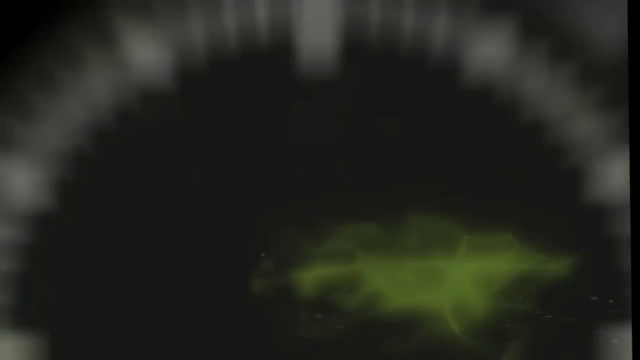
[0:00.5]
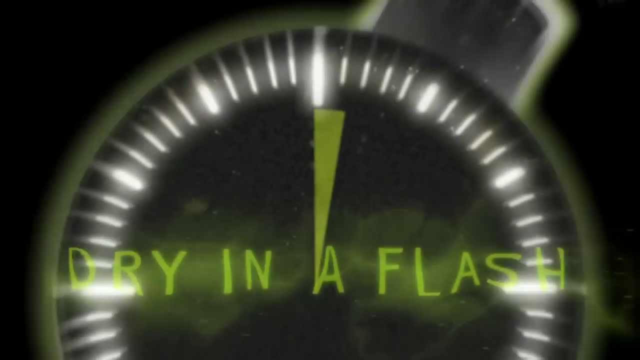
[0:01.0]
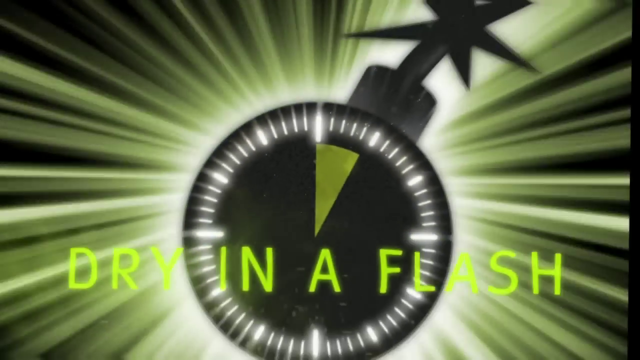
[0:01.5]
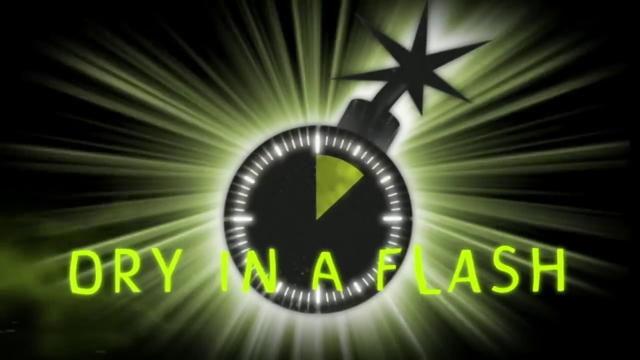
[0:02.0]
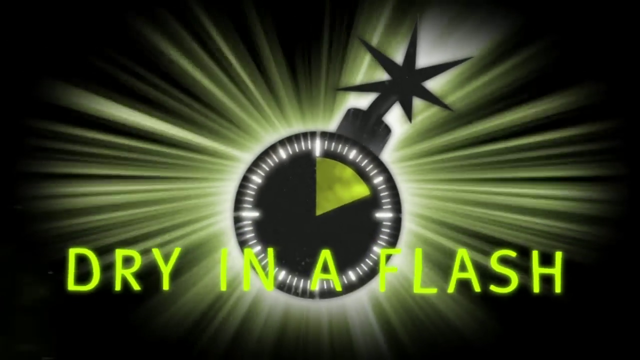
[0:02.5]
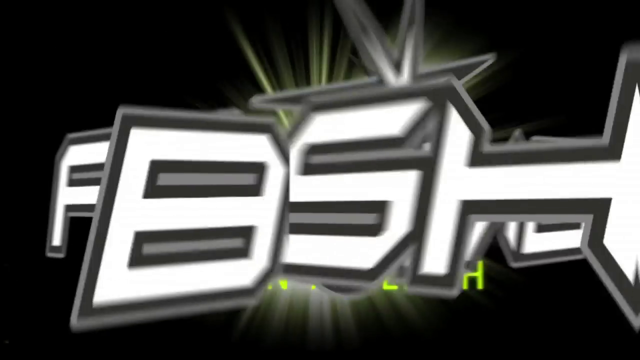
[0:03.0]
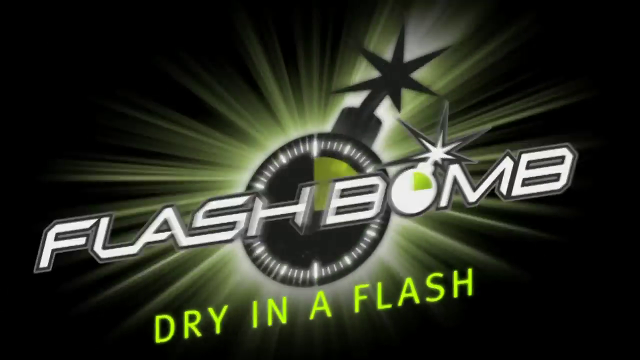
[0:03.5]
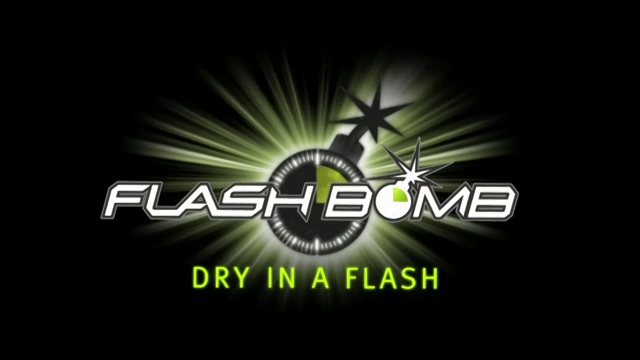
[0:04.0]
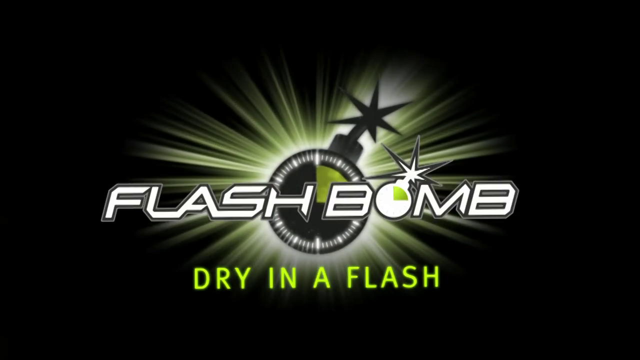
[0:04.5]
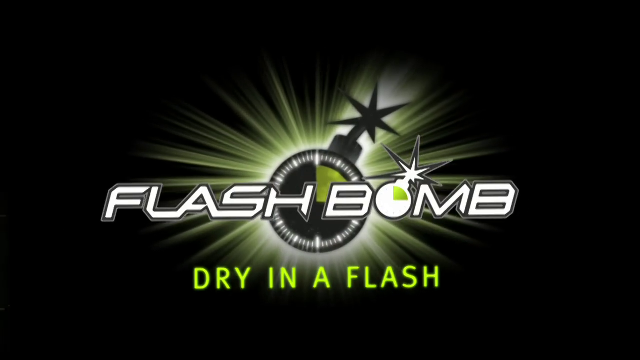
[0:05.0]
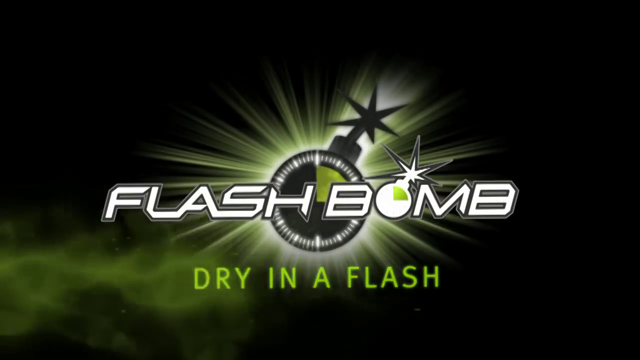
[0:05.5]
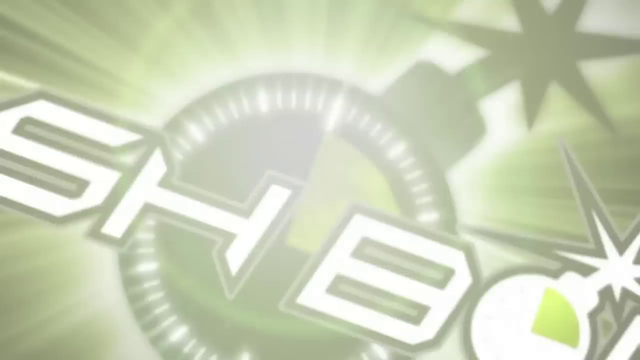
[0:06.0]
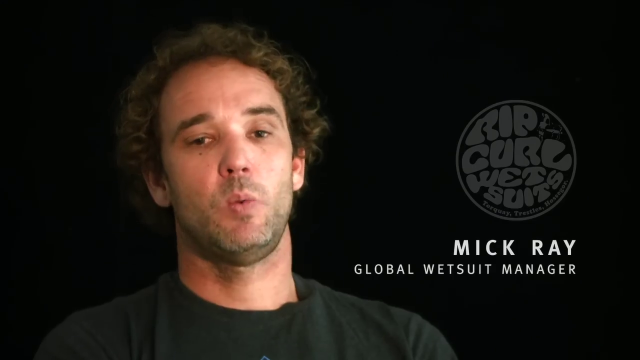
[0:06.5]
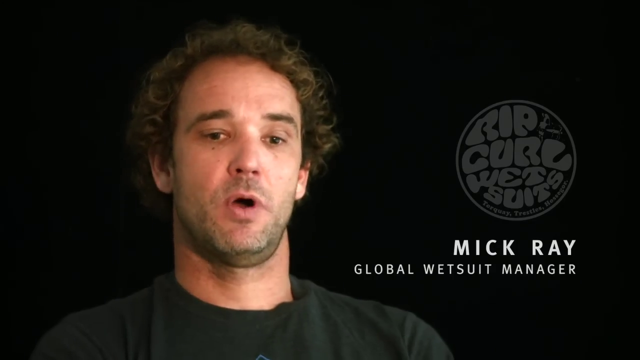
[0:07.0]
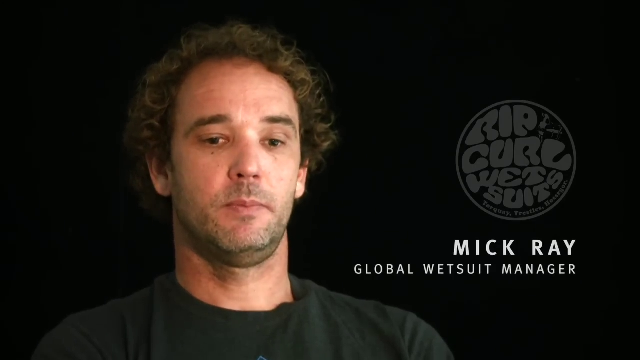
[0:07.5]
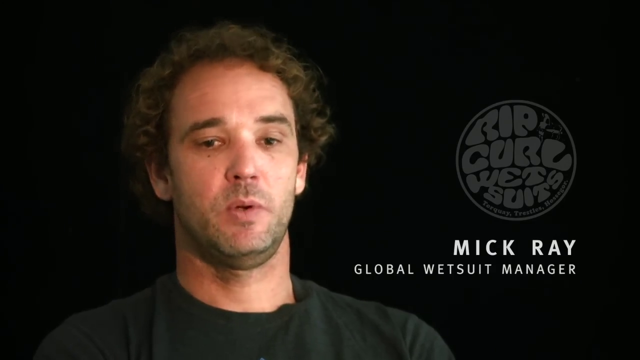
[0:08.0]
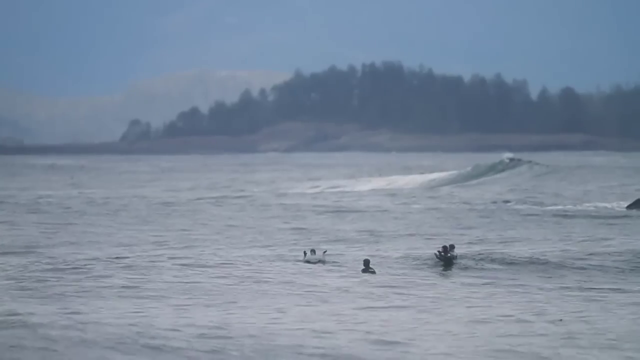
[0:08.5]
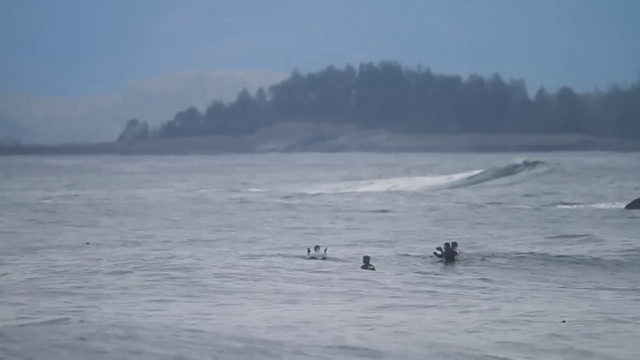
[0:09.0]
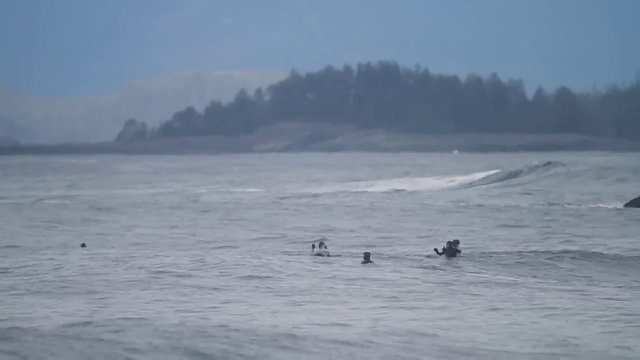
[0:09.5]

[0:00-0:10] Against a black background, yellow writing appears along with a big bomb-like object that pops up, and the text reads "dry in a flash". The bomb has a timer on it counting down, with a big bright light behind it. Then "flash bomb" appears in big white letters across the bomb-like object, with "dry in a flash" on the bottom; the O in "bomb" is another bomb. Next is a man named Mick Ray, with the text "global wetsuit manager" and "rip curl wetsuits". He is a white male who looks to be probably in his thirties, with brown curly hair and a scruffy-looking beard, wearing a black shirt in front of a black screen, and he is talking. The scene changes to a beach where a few people are swimming and jumping around in the waves as they come in. The water moves from left to right toward the land. In the background are the land with a bunch of trees and the sky with clouds; it looks kind of like a dreary day, not very bright or sunny. Then there is a close-up of the water, showing it rocking.